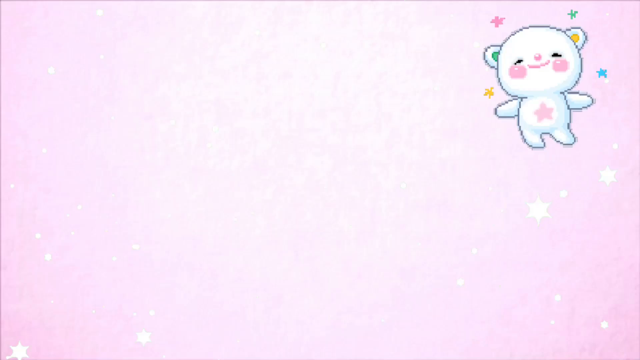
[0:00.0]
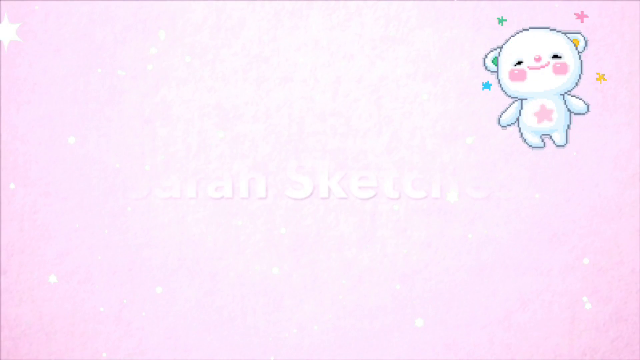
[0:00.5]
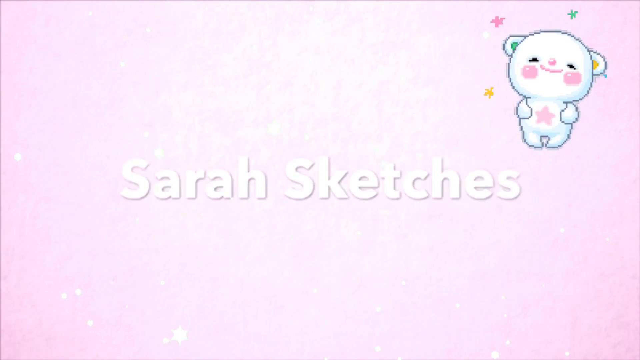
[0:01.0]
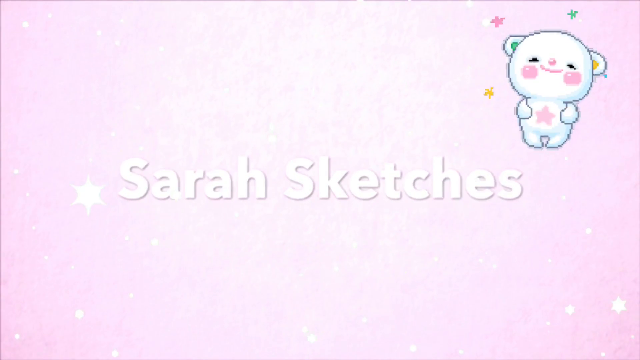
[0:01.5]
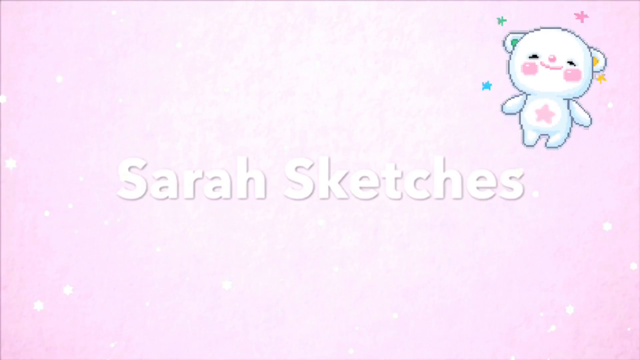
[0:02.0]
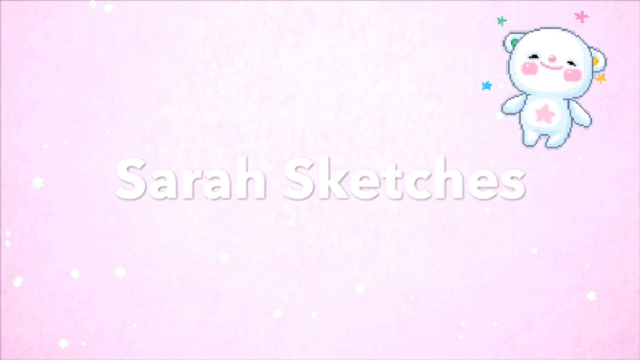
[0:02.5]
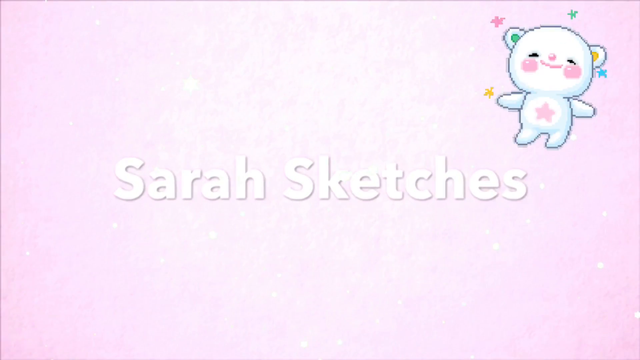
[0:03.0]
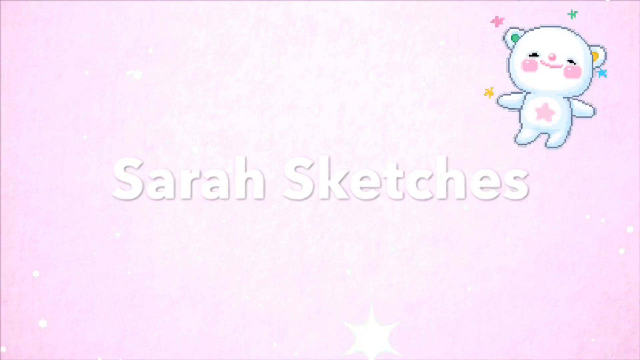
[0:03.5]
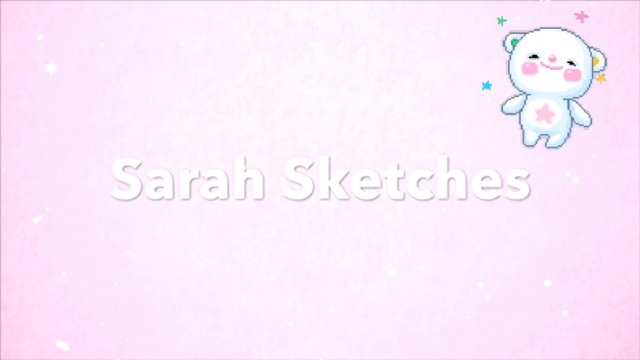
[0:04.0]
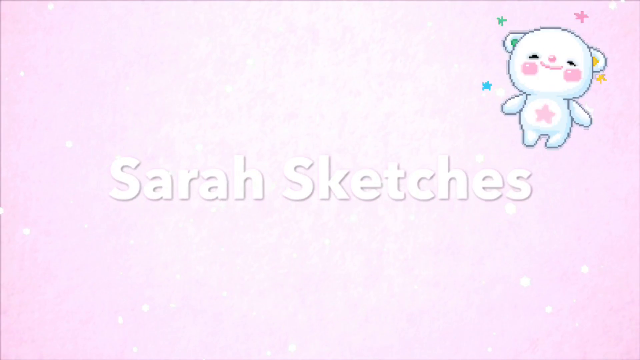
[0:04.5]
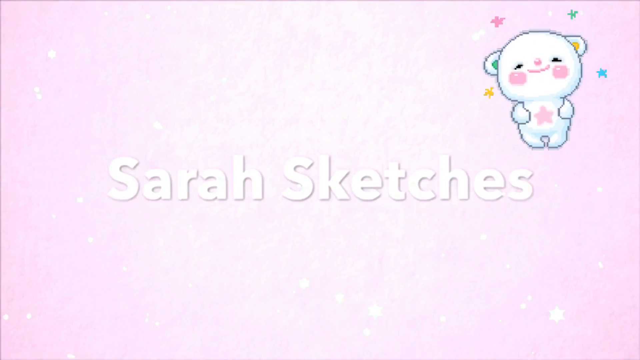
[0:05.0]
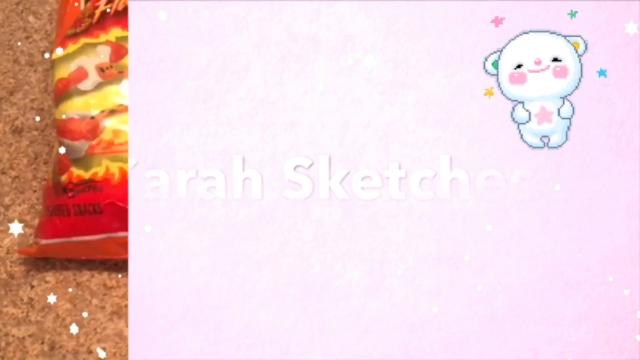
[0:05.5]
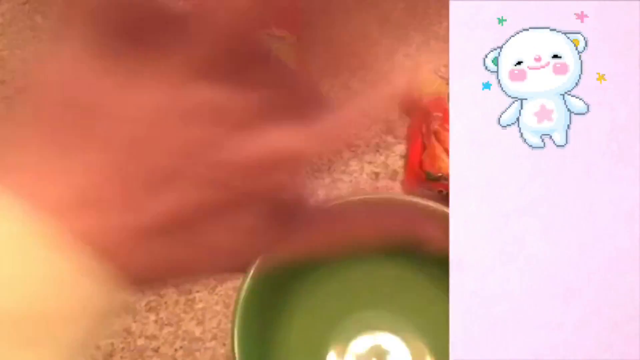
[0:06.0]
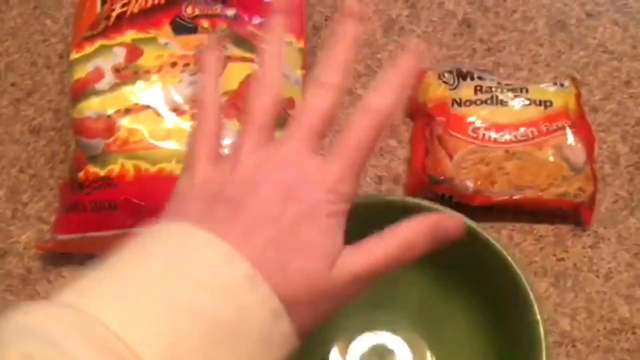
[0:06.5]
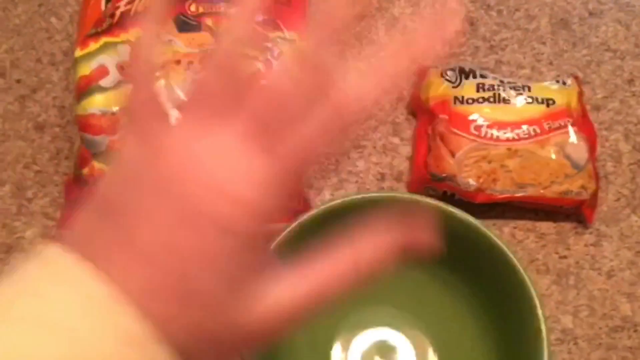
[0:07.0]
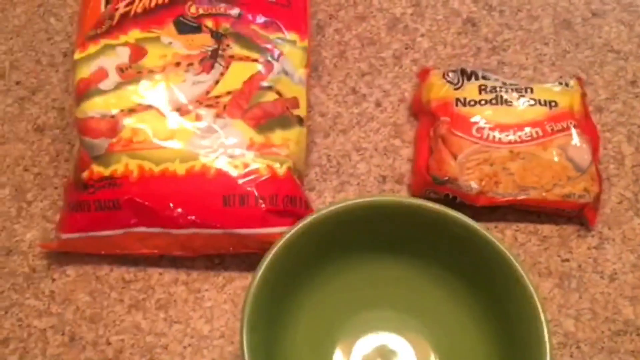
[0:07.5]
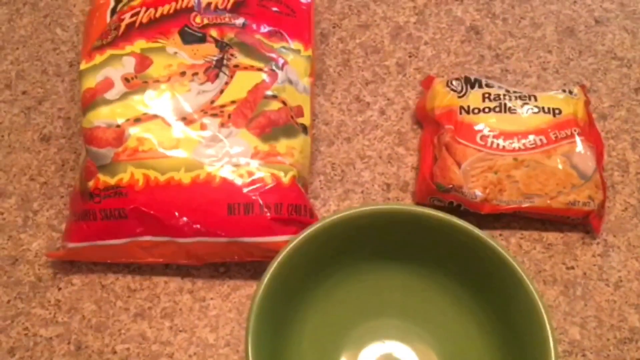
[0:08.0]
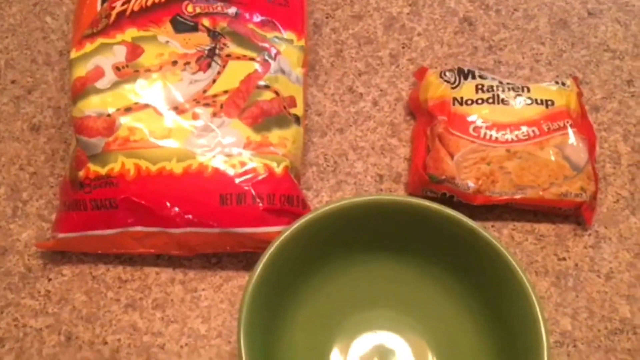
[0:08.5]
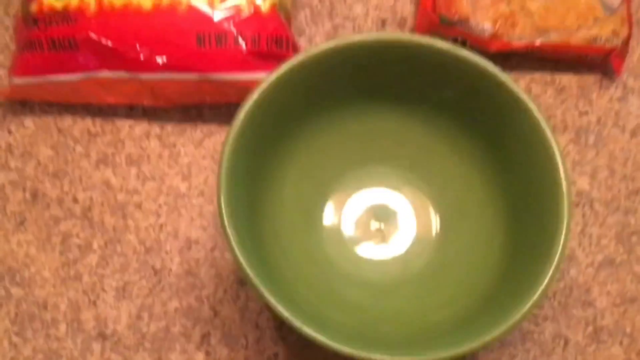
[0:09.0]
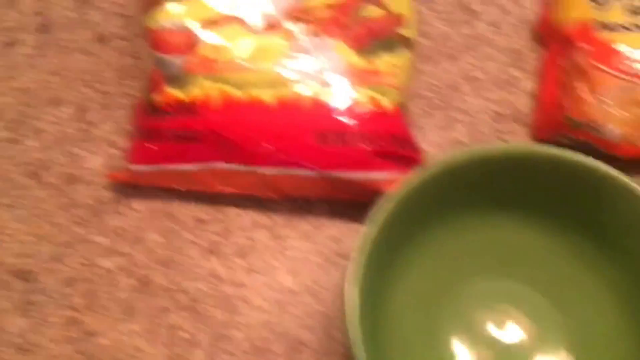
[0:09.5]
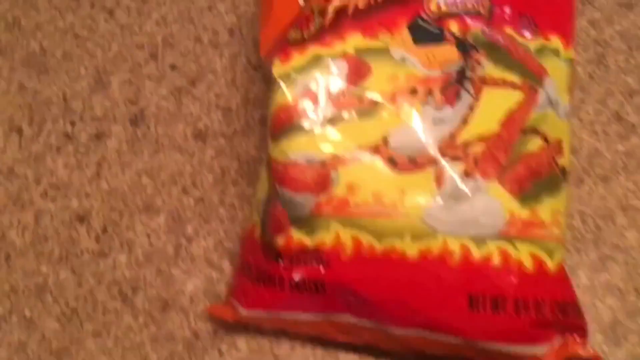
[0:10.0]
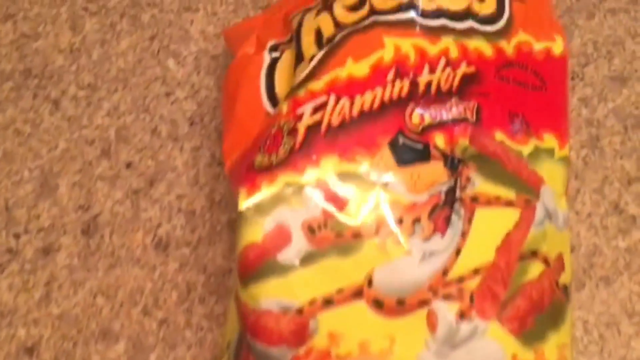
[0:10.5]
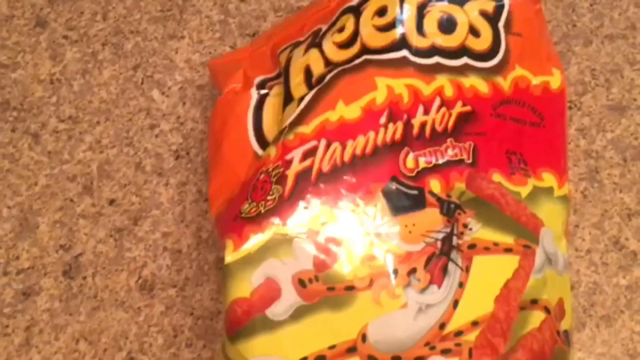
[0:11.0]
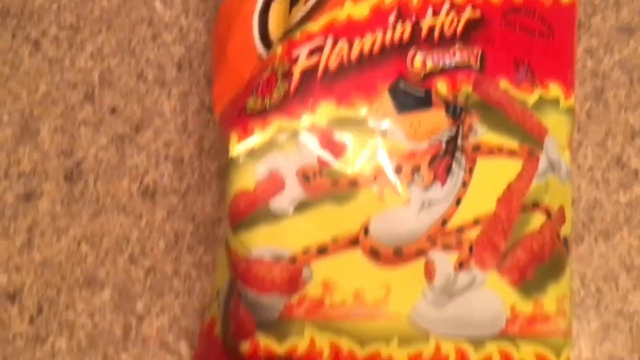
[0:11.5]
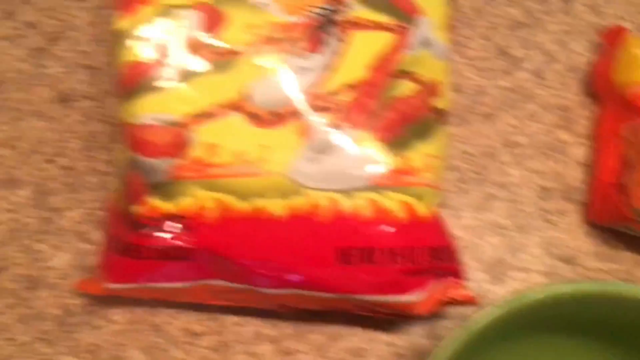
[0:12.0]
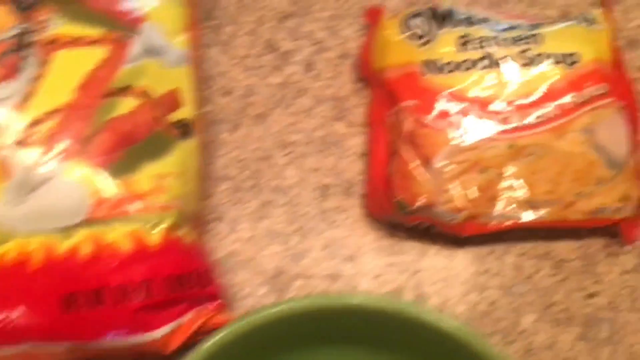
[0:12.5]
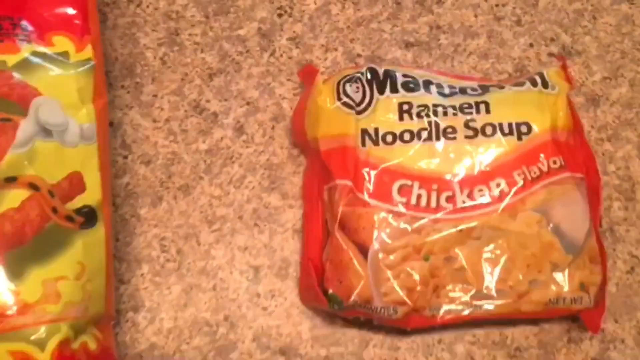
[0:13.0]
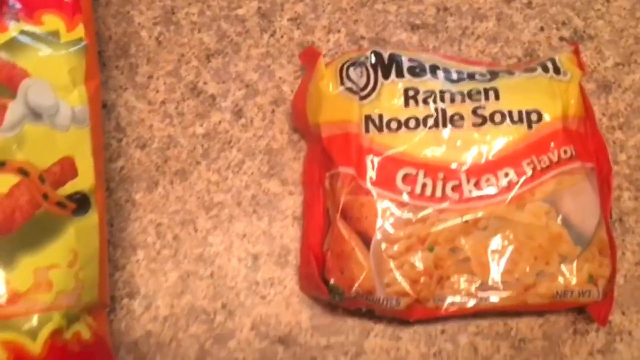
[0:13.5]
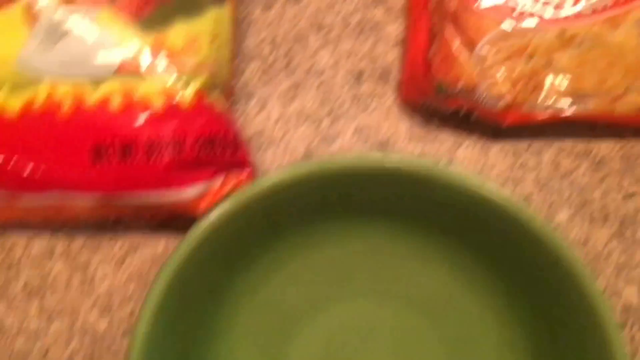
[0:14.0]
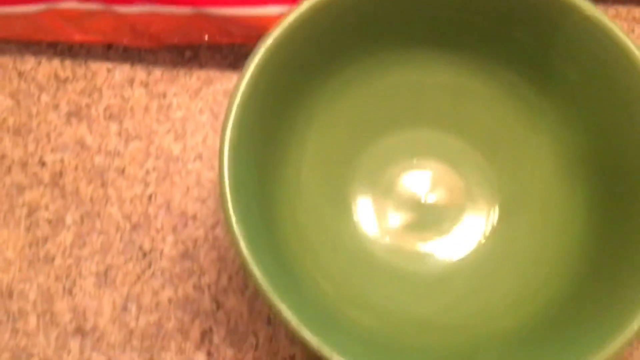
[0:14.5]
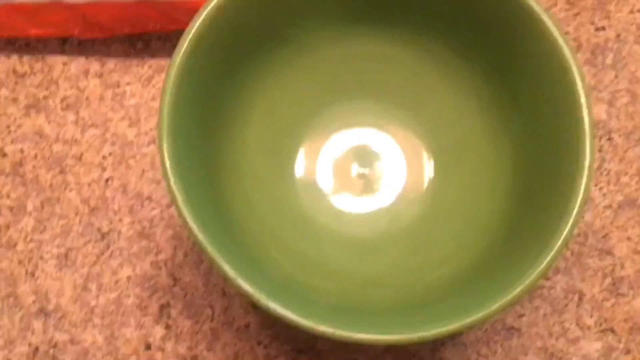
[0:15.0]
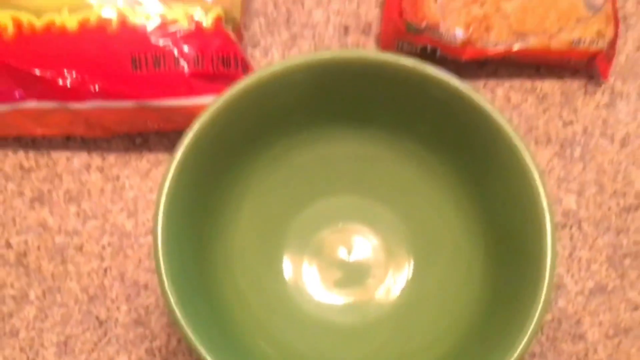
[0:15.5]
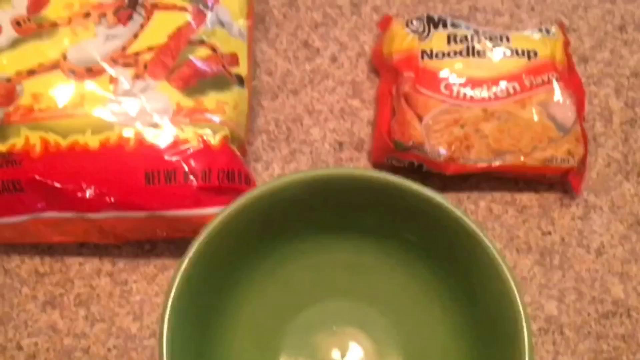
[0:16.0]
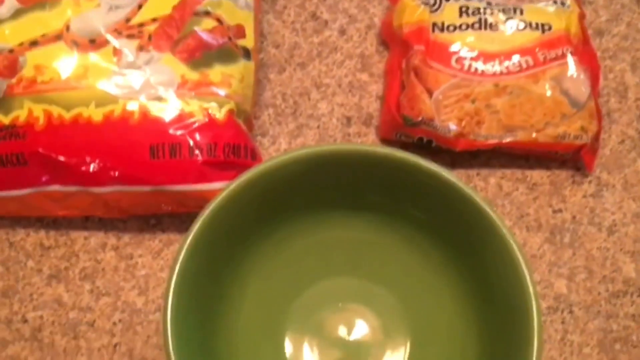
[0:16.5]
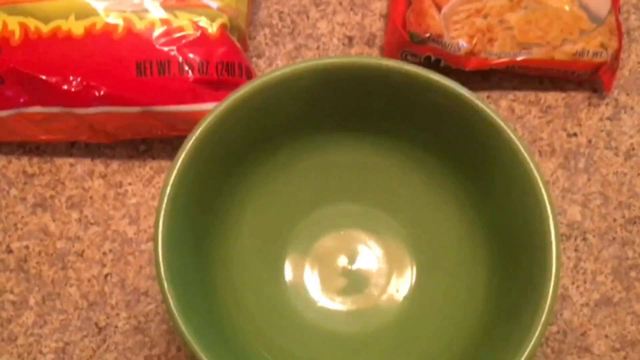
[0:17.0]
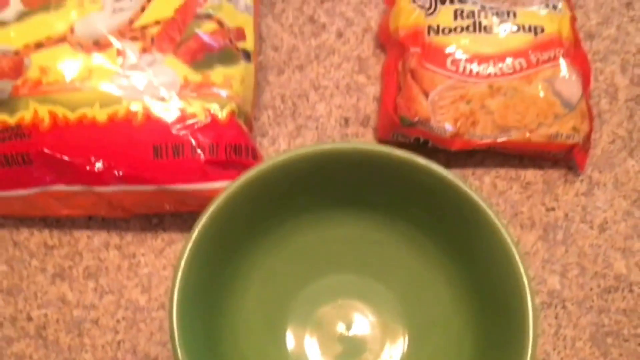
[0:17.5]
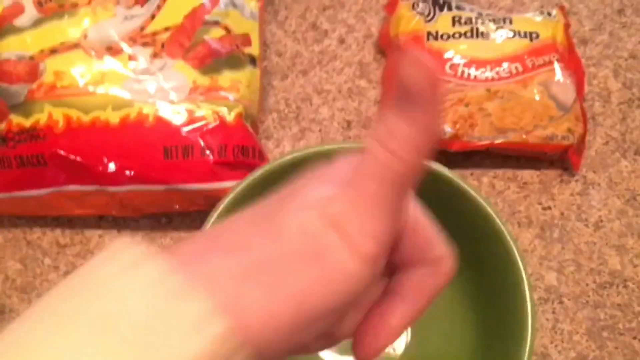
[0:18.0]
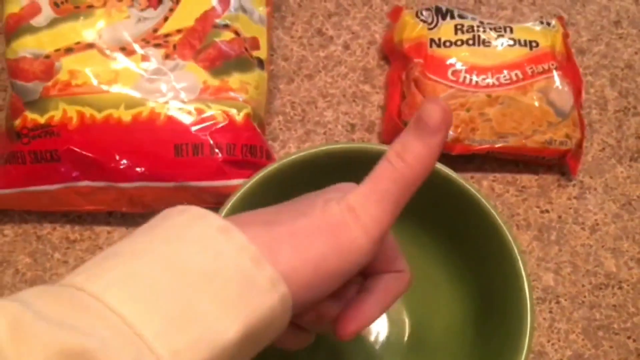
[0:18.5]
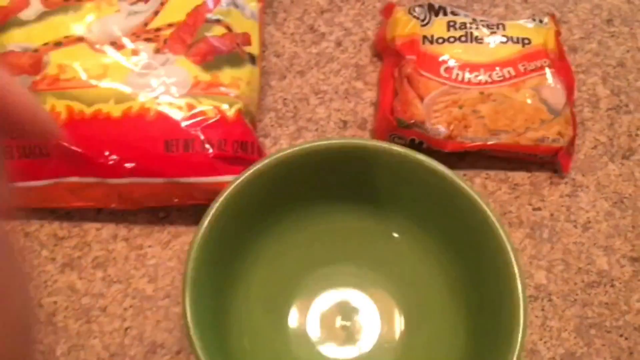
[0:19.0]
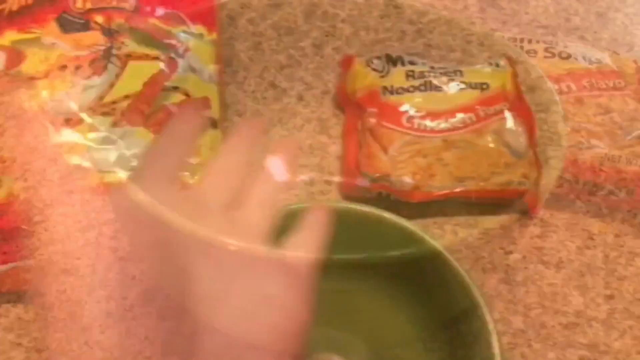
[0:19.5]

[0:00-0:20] This is the beginning of an instructional recipe video for Flaming Hot Cheetos Ramen. A green ceramic bowl is sitting on a brown granite countertop, with one bag of Cheetos and one bag of chicken ramen to the right of it. A hand, Caucasian and looking to be male, in a pale yellow button-down shirt, comes into view; it is the person's left hand. The hand gives a thumbs up. It turns up, goes back and forth over the top of the bowl, and then points to the Cheetos and to the ramen. It gives a thumbs up over the top of the bowl and then turns palm up. The setting is probably a kitchen, given the granite countertop.